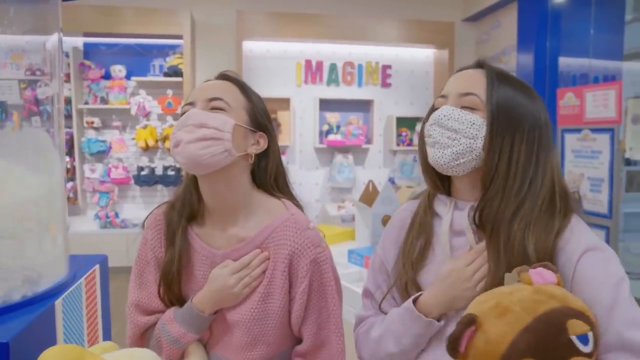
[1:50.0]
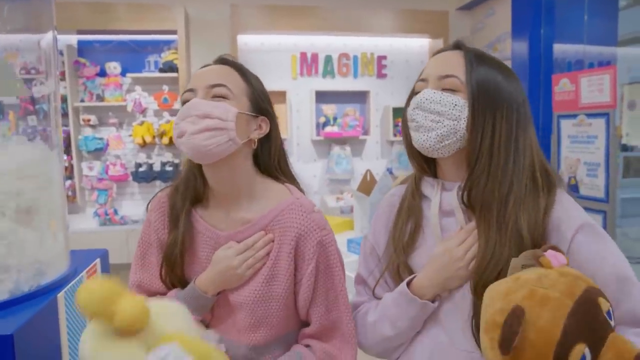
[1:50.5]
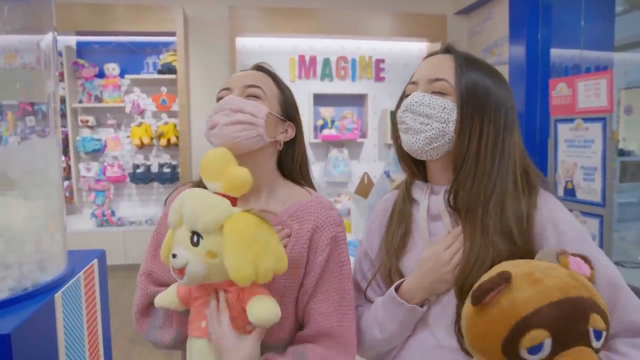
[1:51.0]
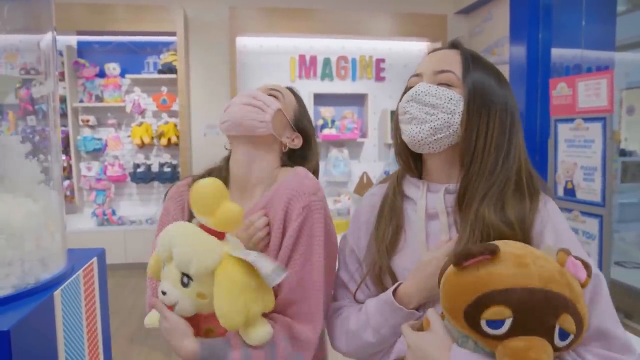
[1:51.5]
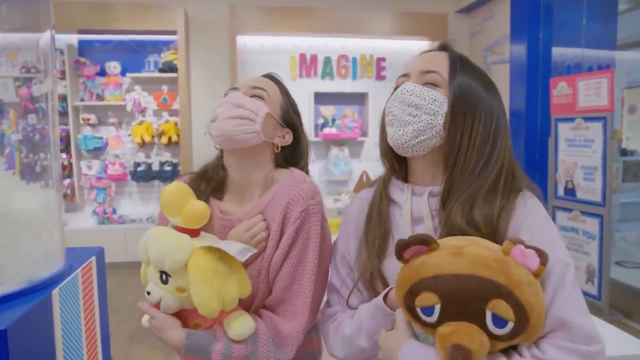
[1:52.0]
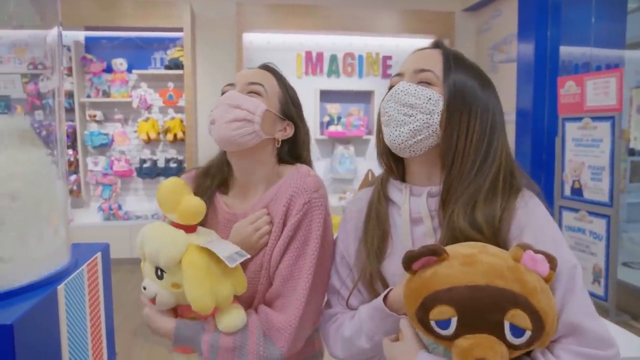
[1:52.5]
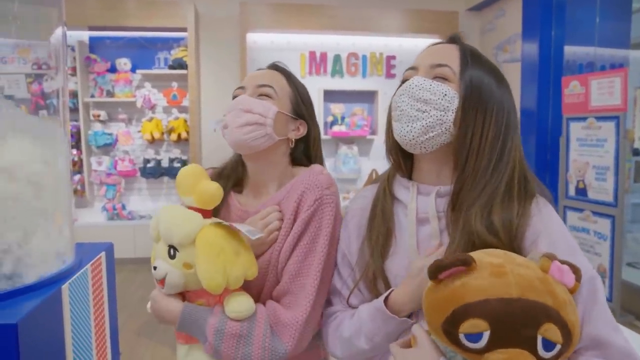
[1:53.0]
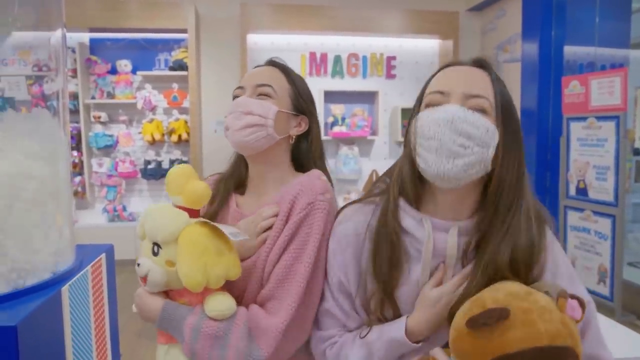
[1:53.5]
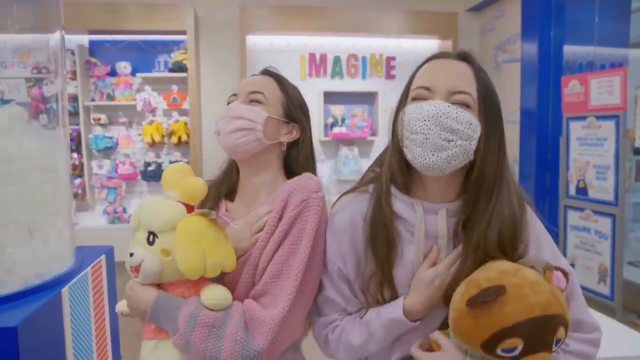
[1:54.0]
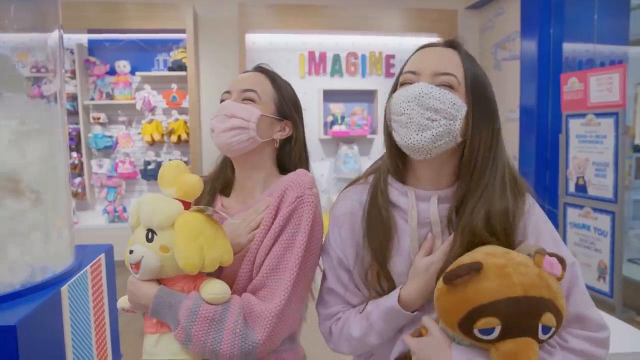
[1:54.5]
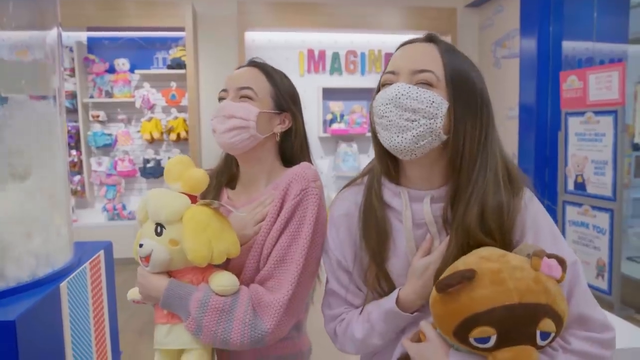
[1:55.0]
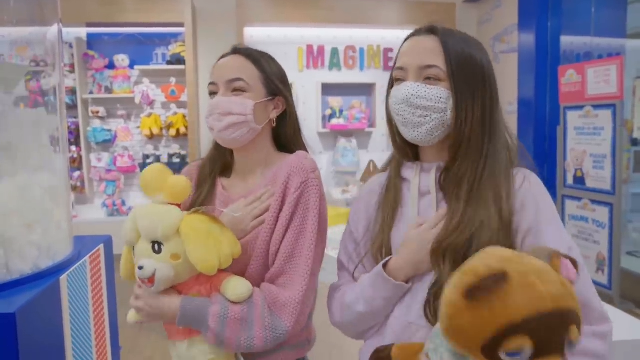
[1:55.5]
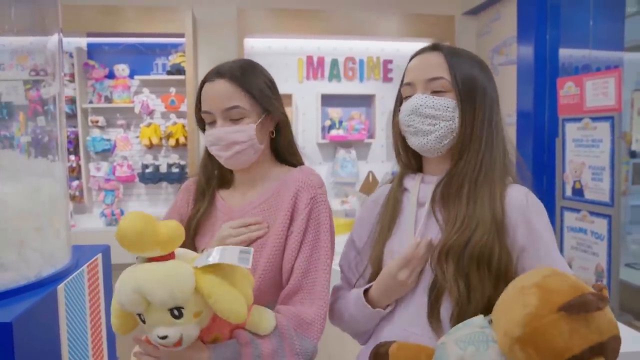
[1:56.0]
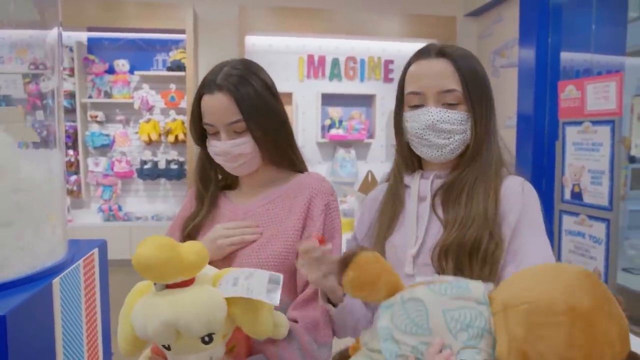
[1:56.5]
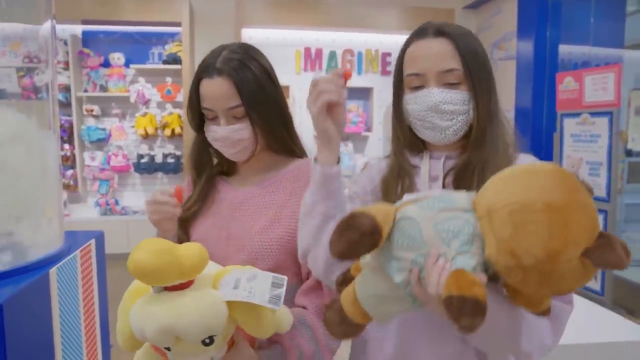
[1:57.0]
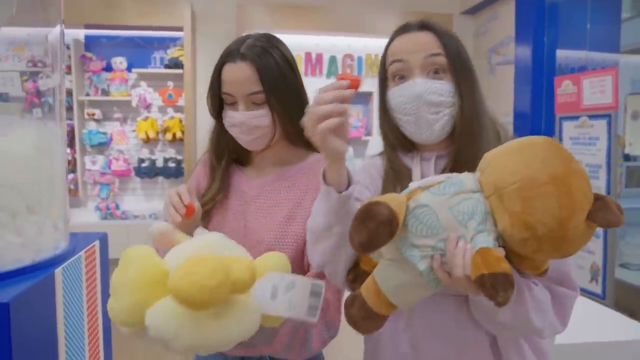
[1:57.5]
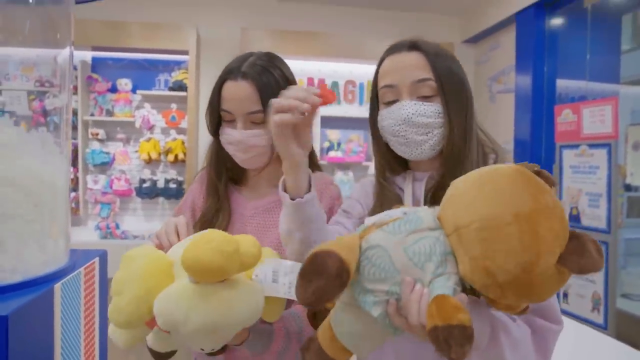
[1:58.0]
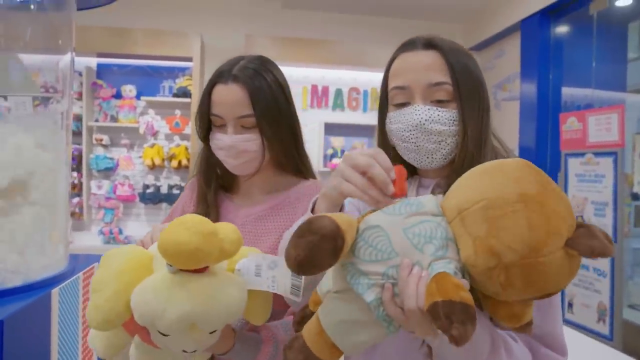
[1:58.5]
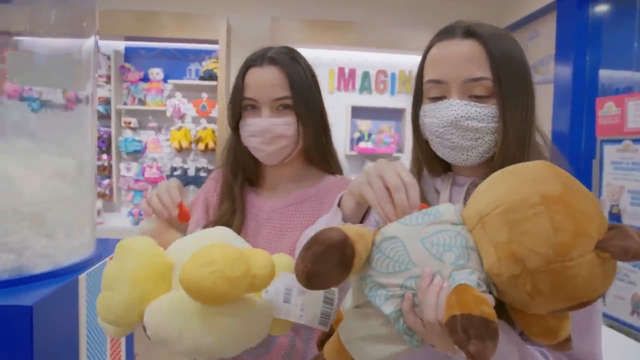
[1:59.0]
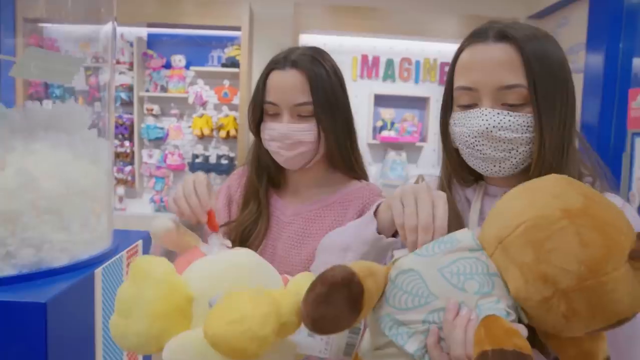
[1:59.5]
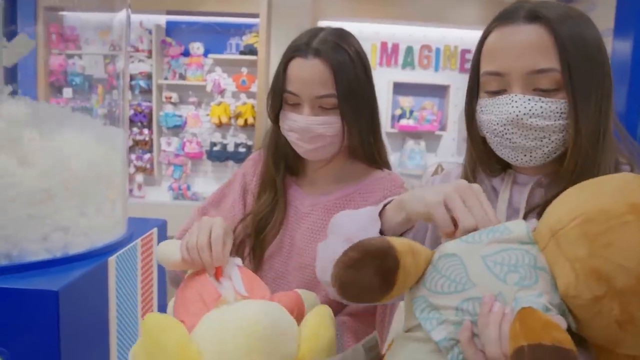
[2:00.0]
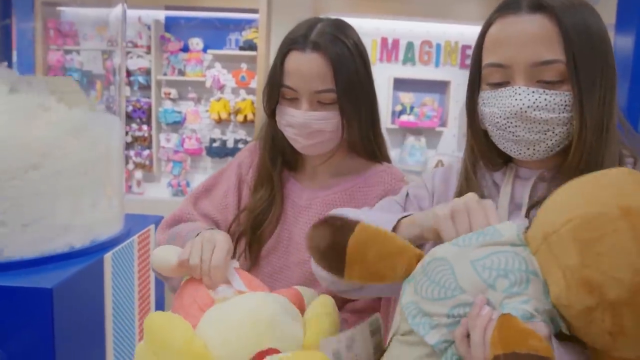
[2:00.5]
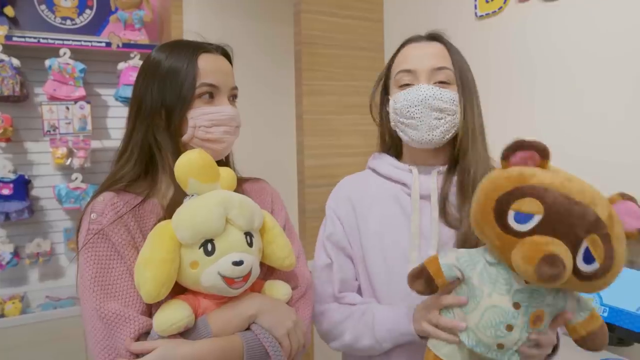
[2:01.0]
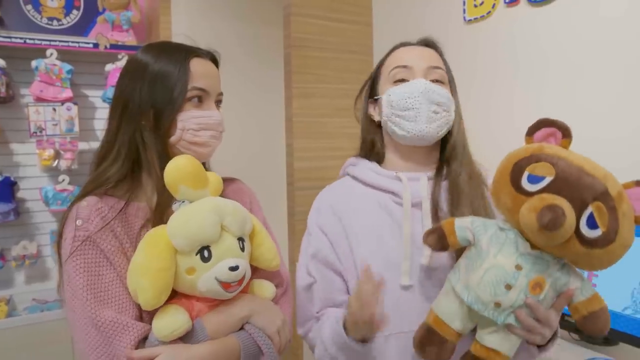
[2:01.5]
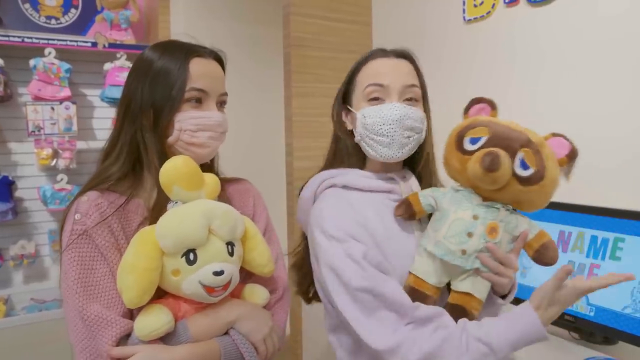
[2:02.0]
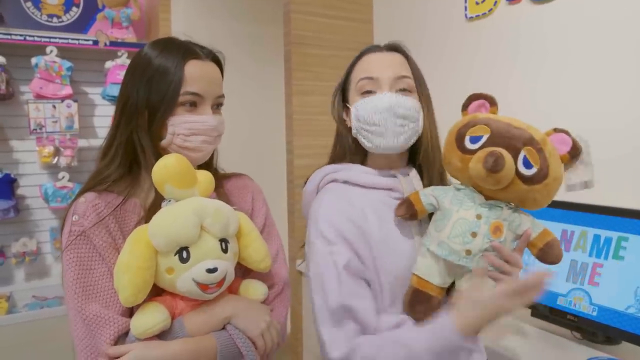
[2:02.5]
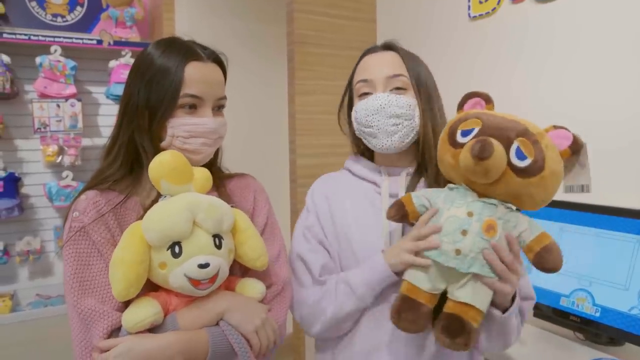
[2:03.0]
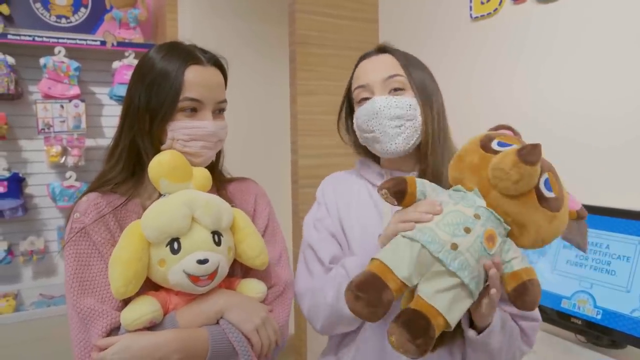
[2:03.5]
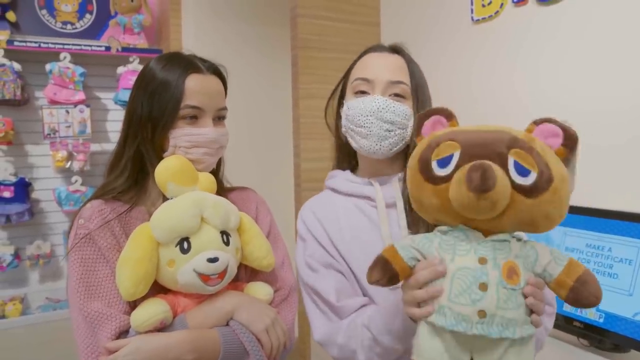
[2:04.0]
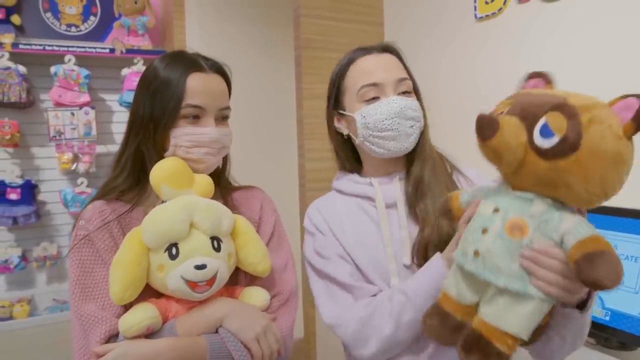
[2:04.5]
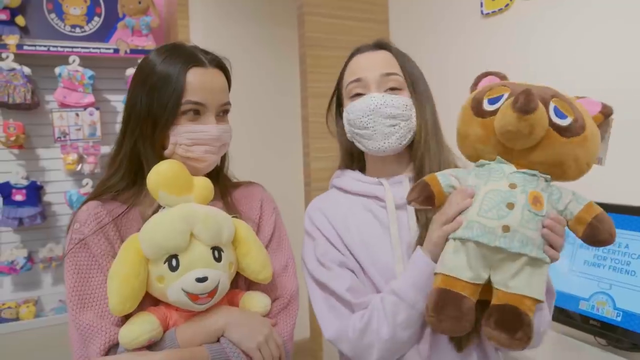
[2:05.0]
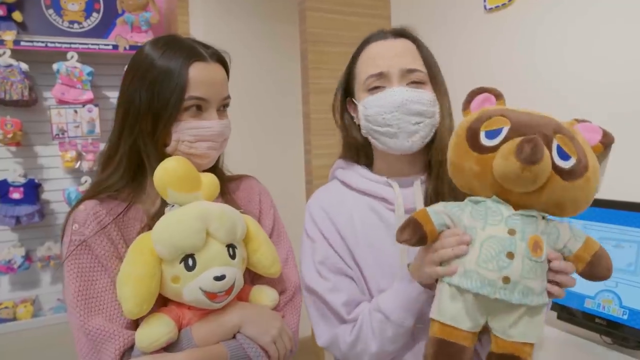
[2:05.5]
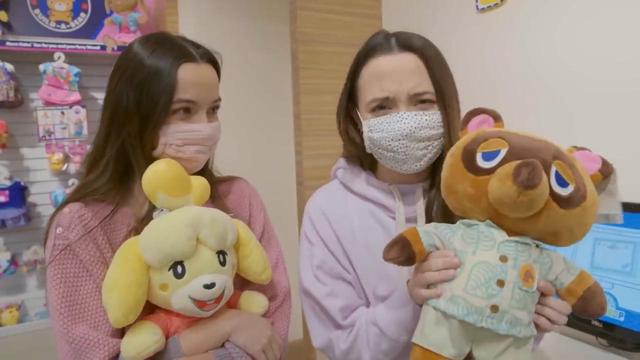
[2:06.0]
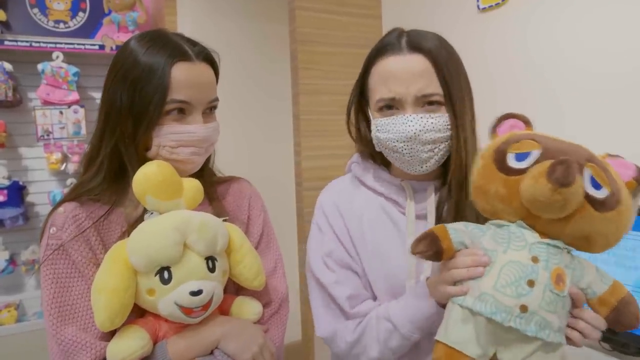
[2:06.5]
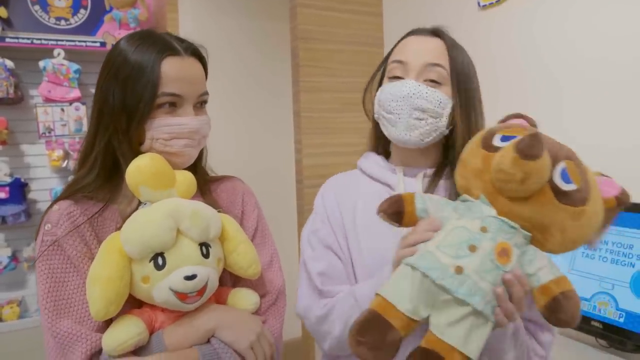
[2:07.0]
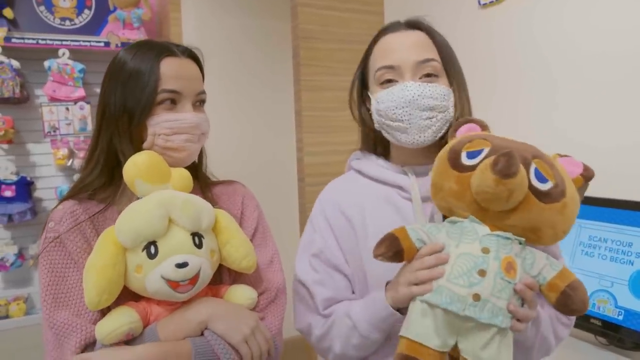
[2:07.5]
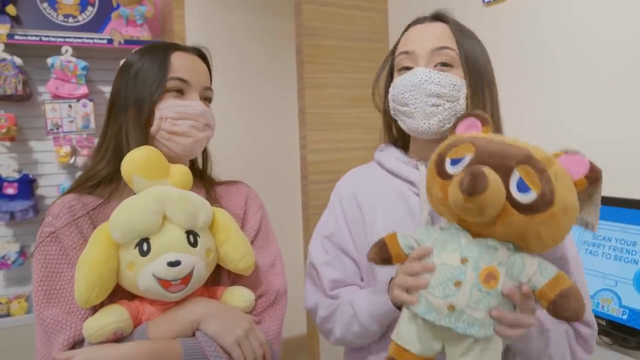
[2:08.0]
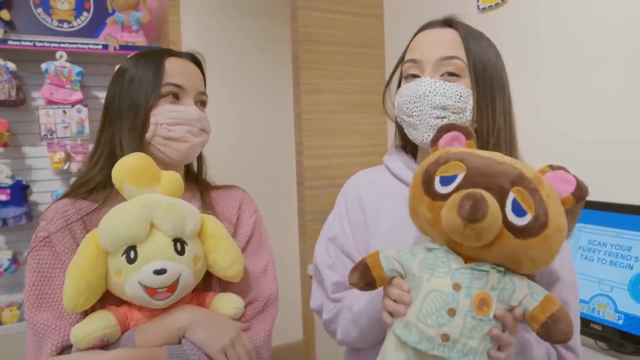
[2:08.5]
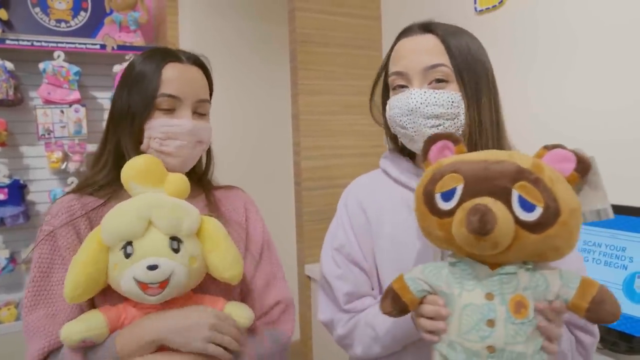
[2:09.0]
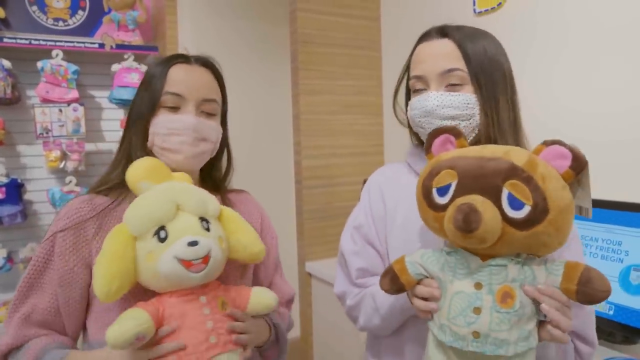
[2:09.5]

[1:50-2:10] The women touch their hearts with their right hands, holding the gadget against their chests. Then each of them puts the gadget she is holding inside her teddy bear and shows it to the camera, which focuses on the teddy bear. Beside them is a machine that rotates and produces cotton. One woman shows her teddy bear to the camera, then the other woman shows hers, both very happy. Behind them the word "imagine" is written in bold. The place looks like a display of children's goodies.